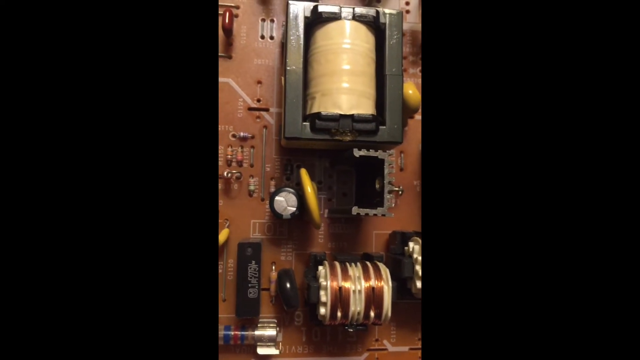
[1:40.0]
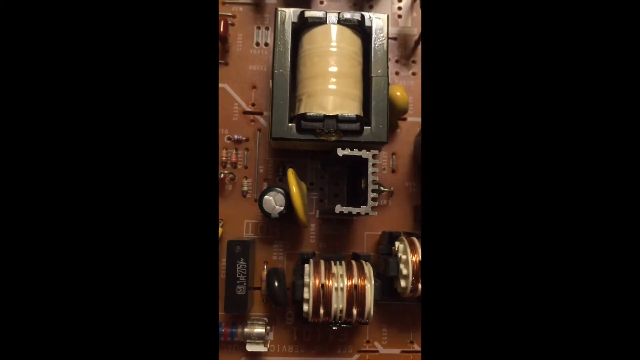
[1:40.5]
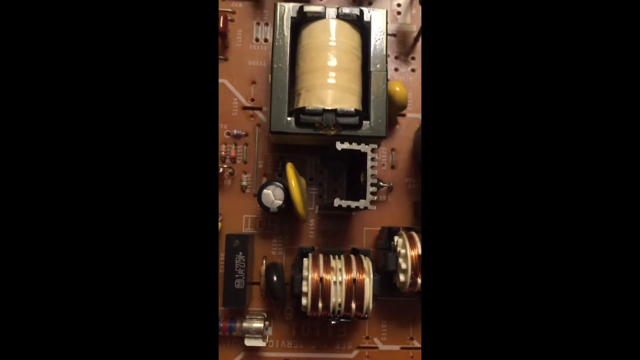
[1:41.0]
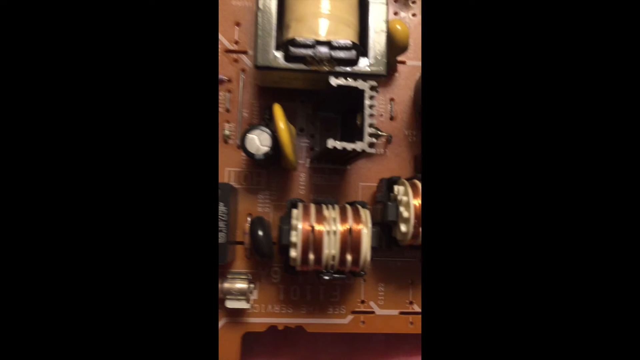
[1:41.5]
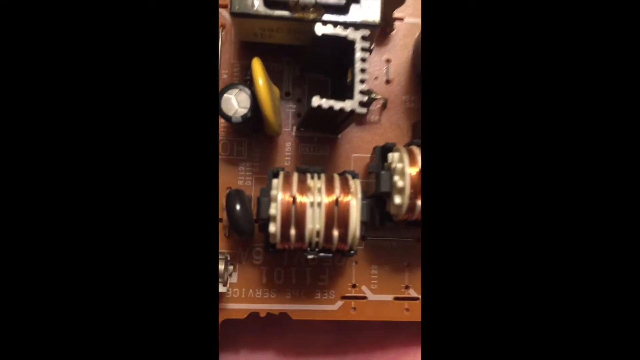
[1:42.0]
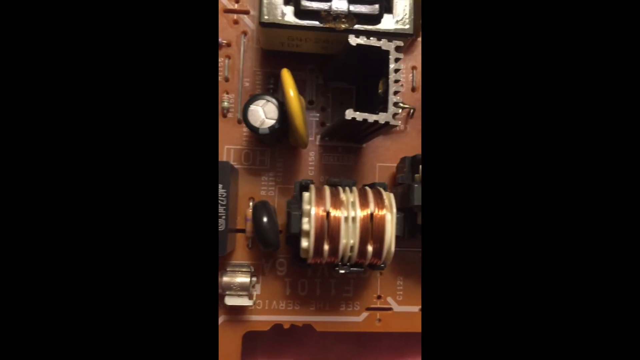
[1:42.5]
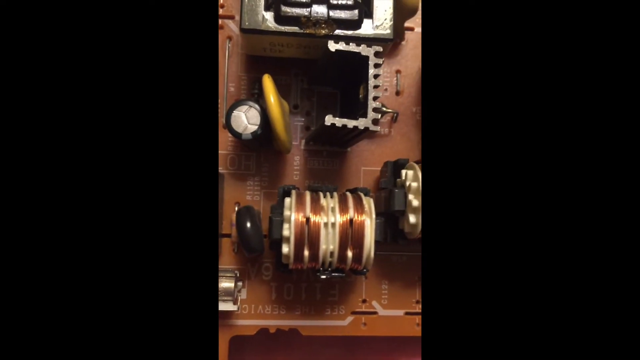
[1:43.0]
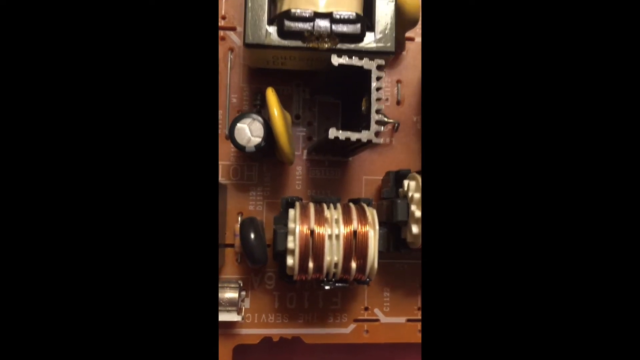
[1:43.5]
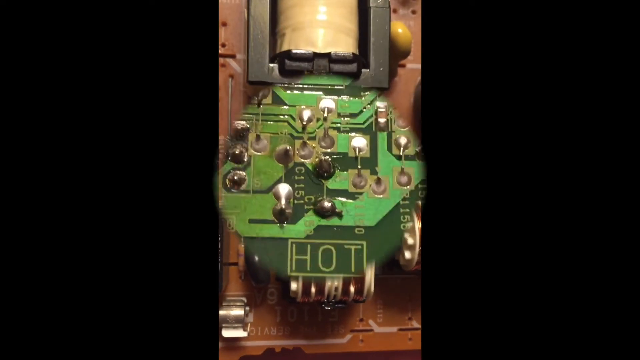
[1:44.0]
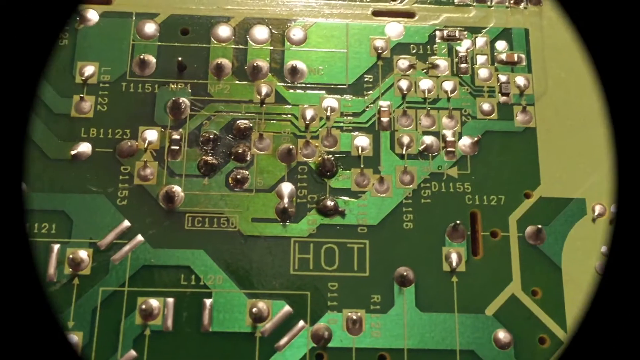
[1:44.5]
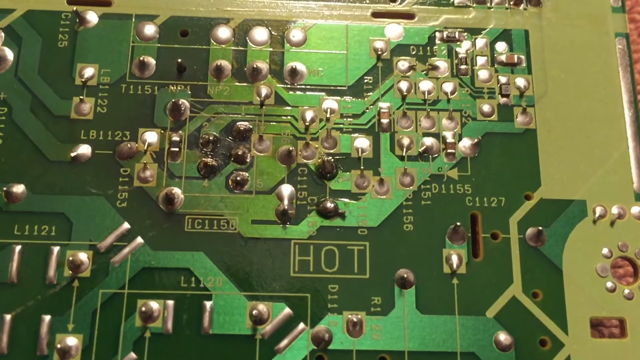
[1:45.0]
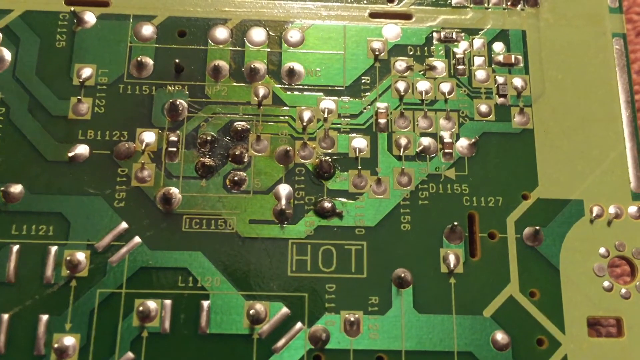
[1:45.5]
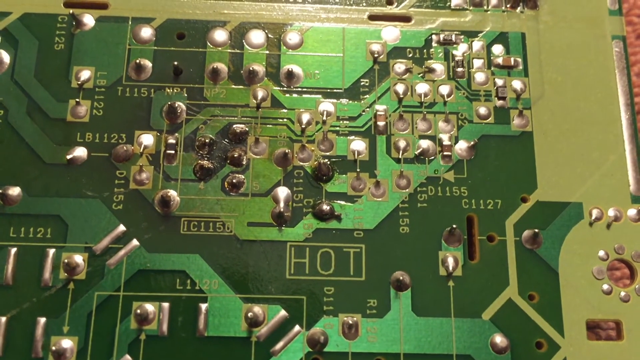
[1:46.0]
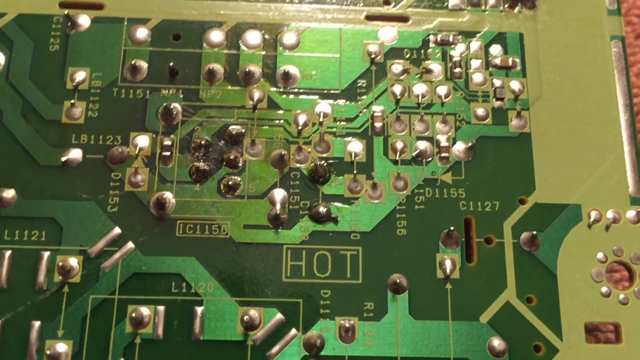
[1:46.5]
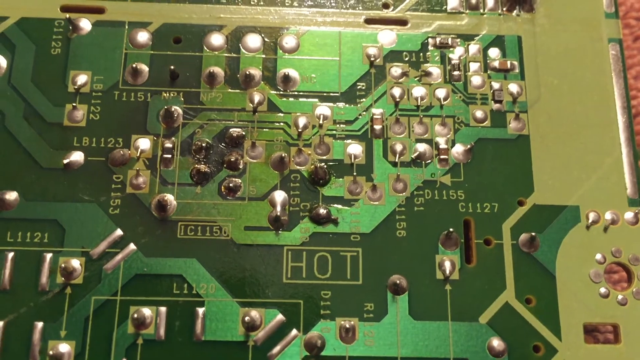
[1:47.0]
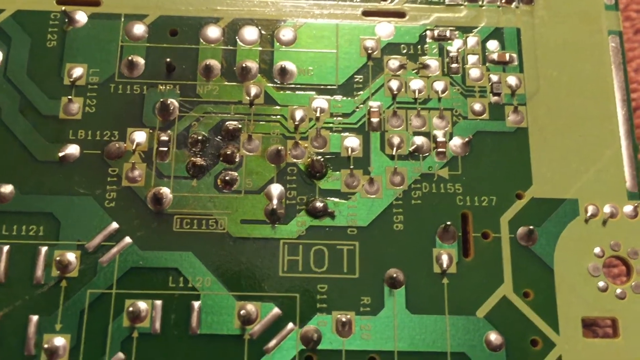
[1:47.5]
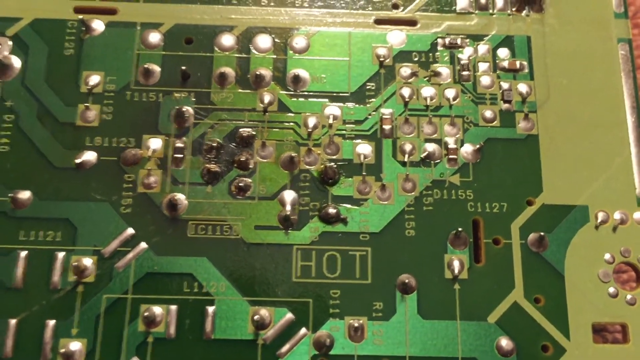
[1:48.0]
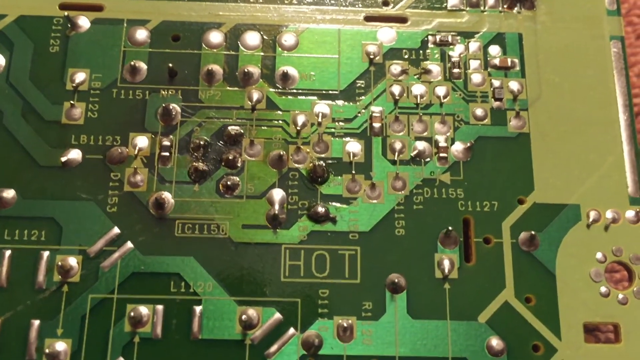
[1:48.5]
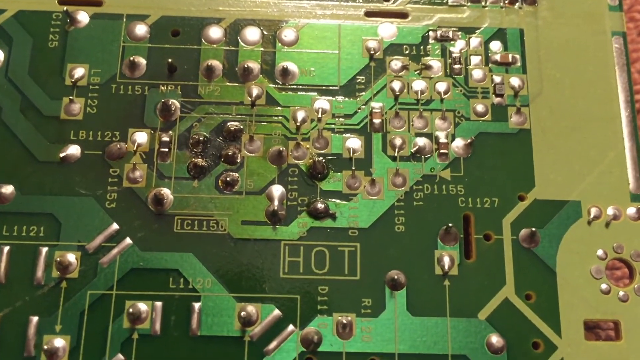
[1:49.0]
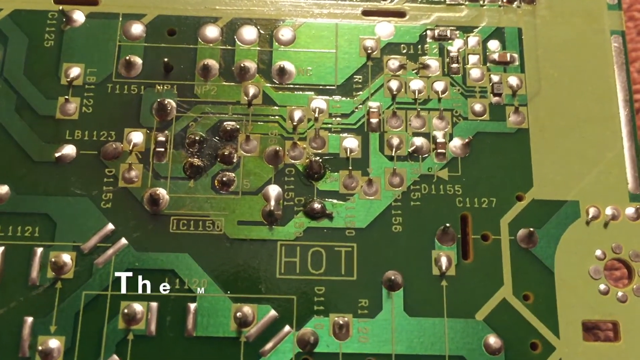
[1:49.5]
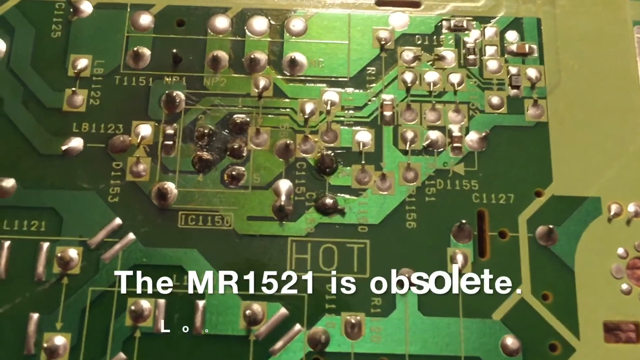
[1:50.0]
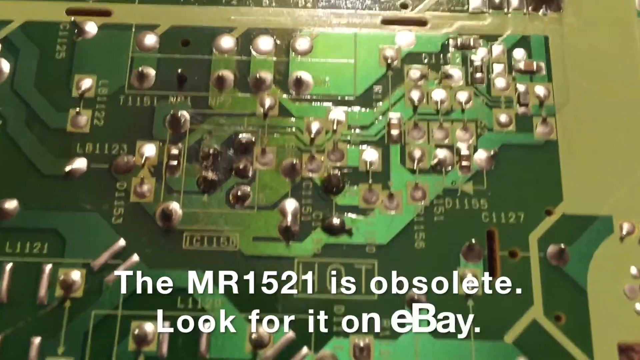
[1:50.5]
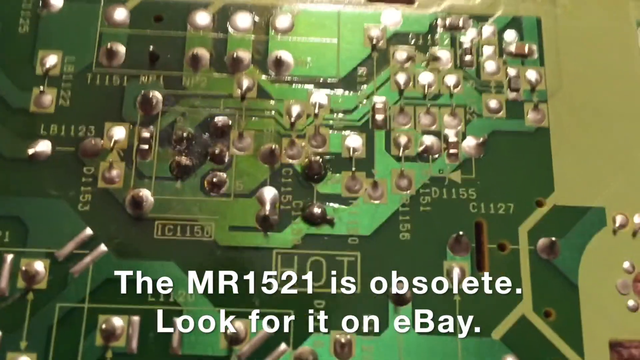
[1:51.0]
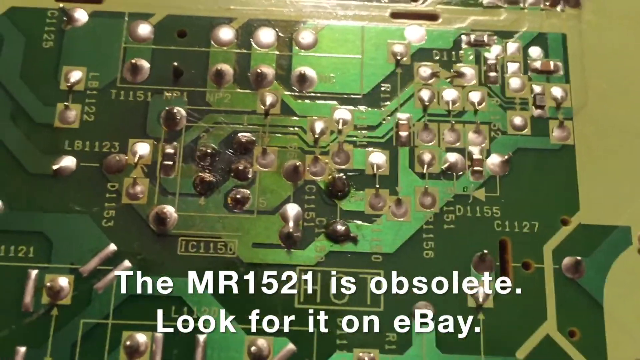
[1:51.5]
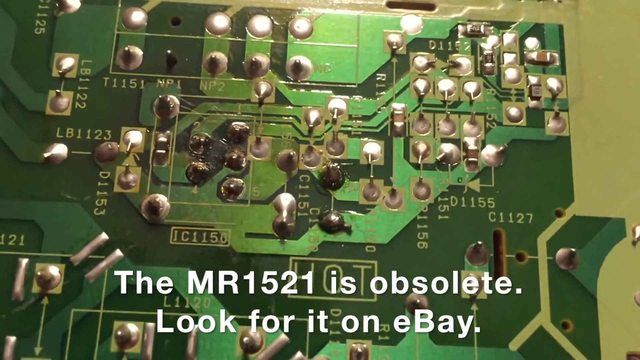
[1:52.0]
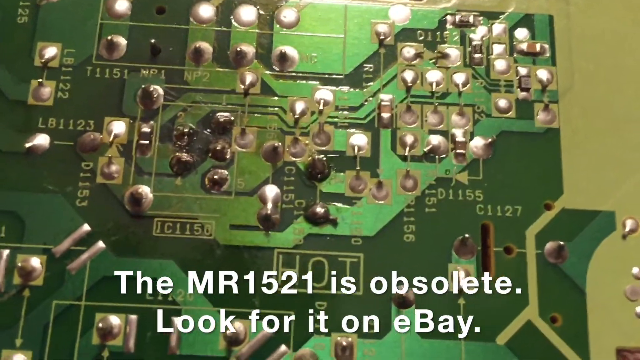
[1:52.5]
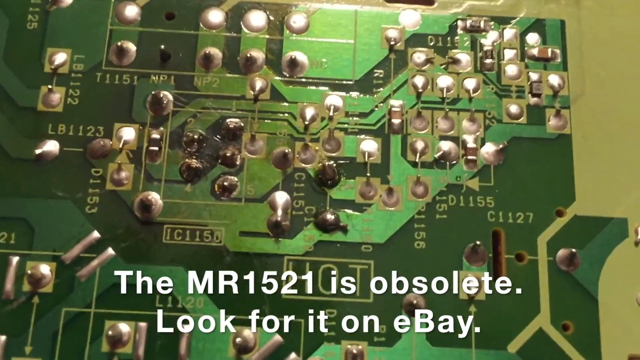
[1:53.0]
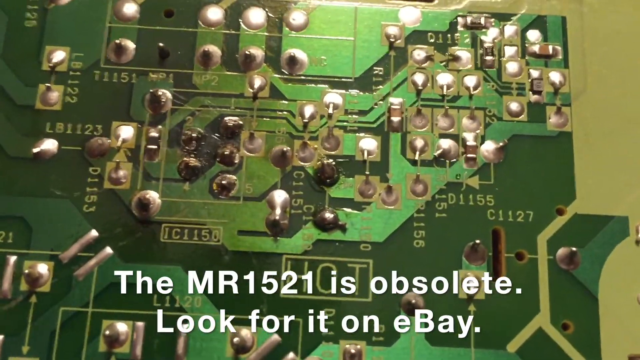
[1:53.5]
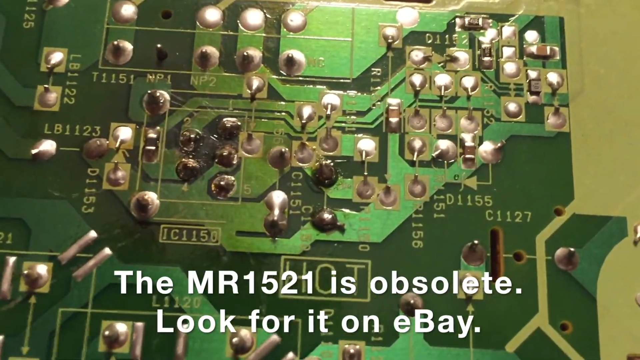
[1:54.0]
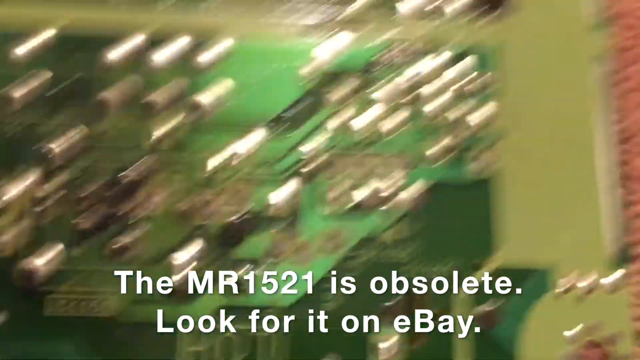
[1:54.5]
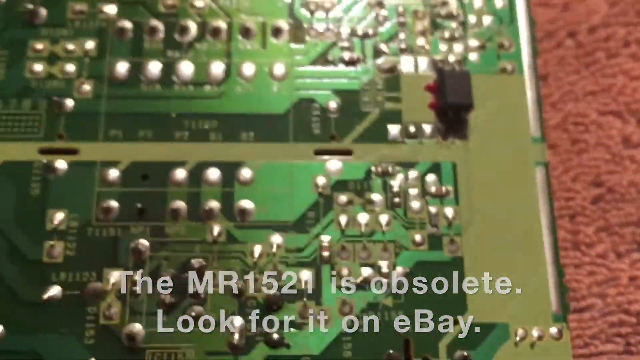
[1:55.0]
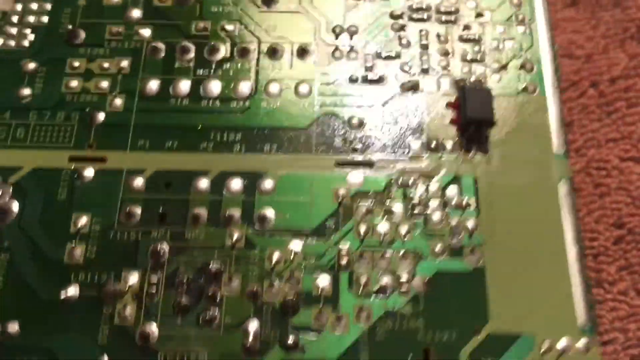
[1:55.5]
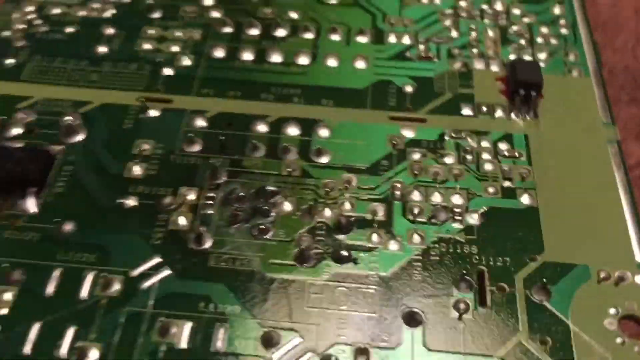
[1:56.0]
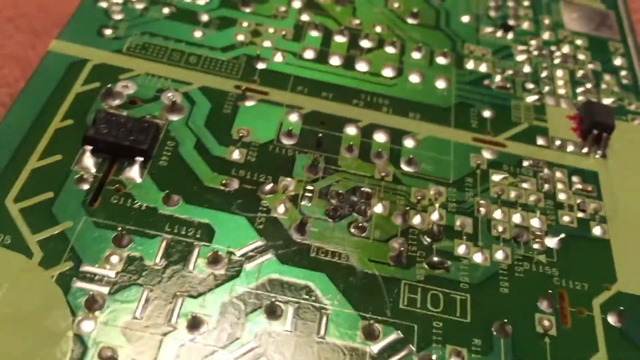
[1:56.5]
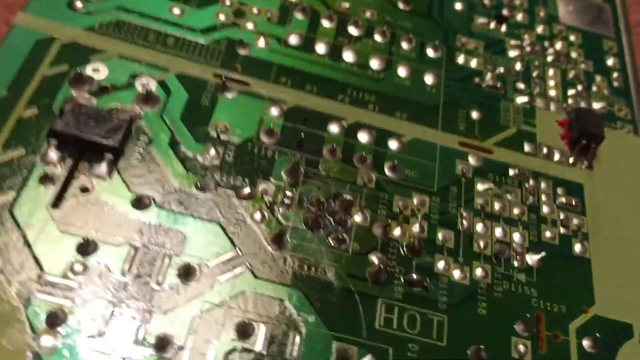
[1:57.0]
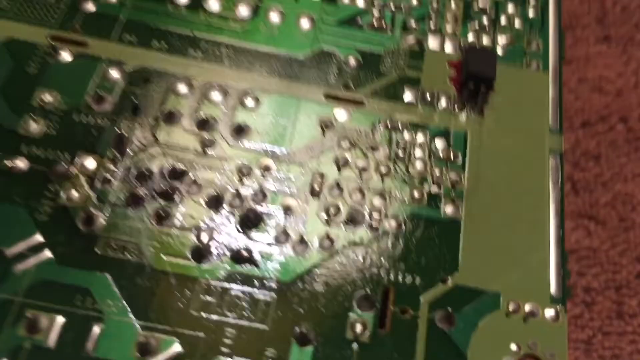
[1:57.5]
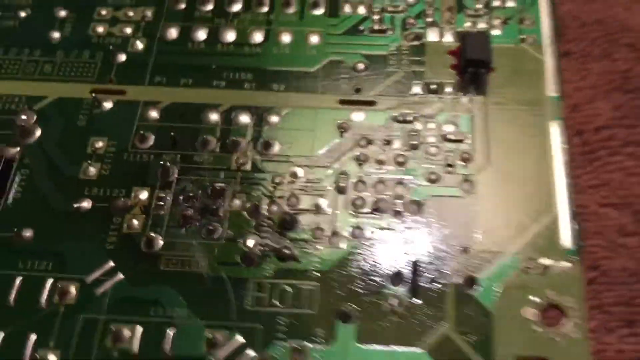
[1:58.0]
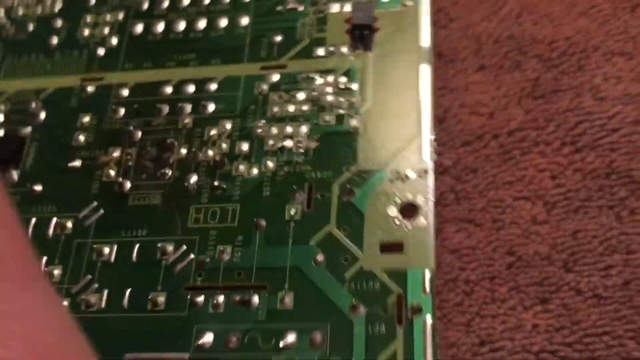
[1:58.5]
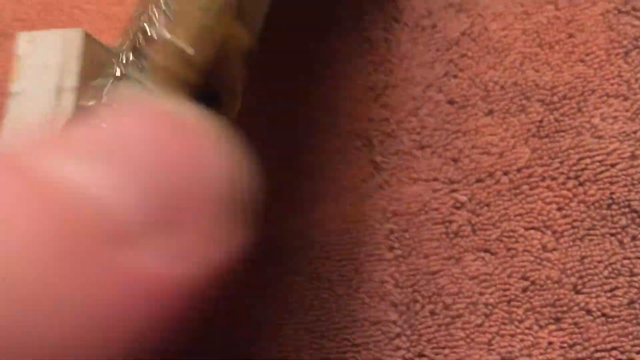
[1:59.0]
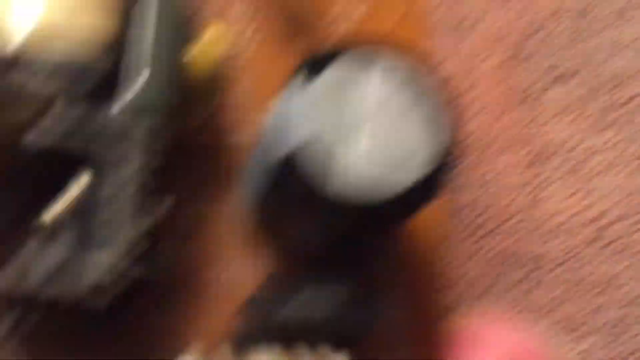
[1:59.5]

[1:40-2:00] The camera zooms in on the row before another circle transition, which shows the backside again, including the hot area and the parts above it. Text appears that reads "the MR1521 is obsolete. Look for it on eBay." The person then sort of rolls the board from side to side: rolled to the left, the right side rises and reflects light toward the camera; rolled back to the right, the left side shines and partly reflects light toward the camera. On the back side, the hot section is on a sort of dark green area where most of the words are written. Above it, where the dots start, the color is lighter green: the left half is a darker, kiwi-like green and the right is more of a neon green, and the two meet just slightly above the "HOT".